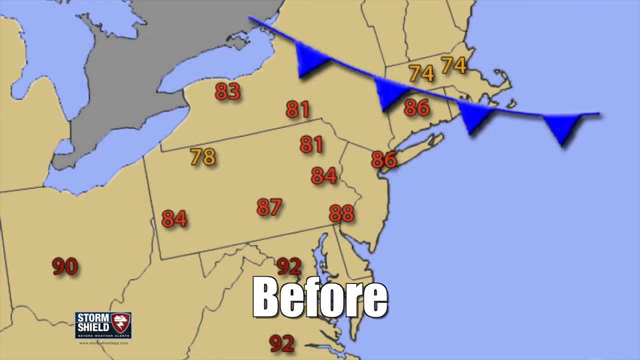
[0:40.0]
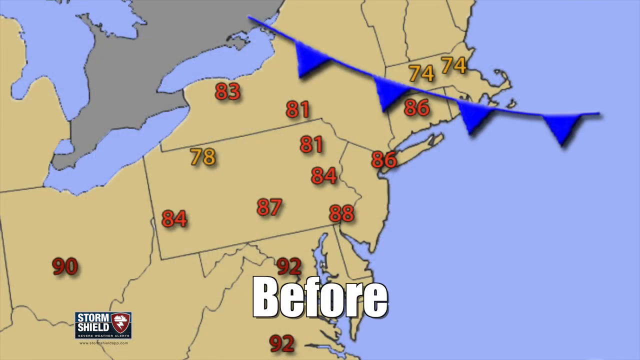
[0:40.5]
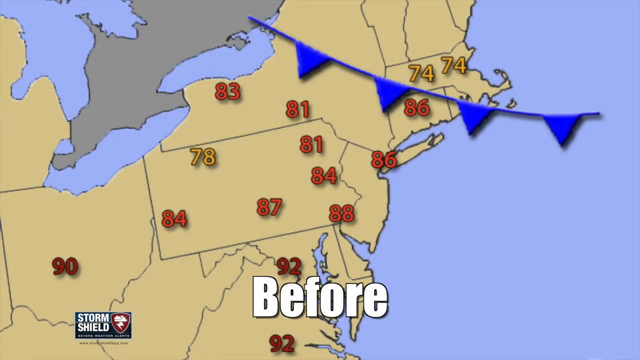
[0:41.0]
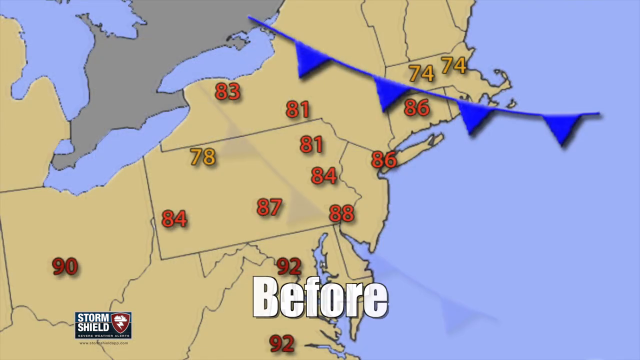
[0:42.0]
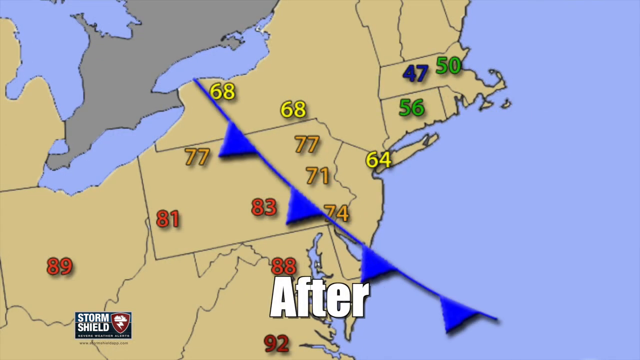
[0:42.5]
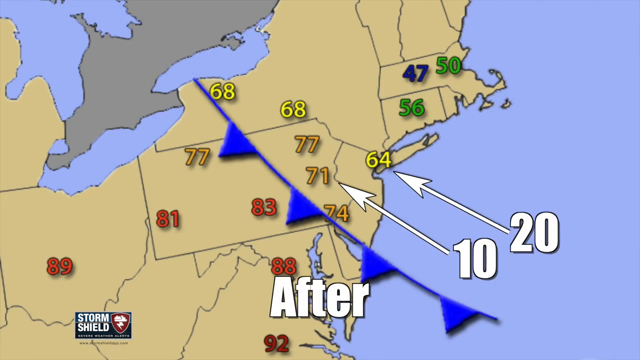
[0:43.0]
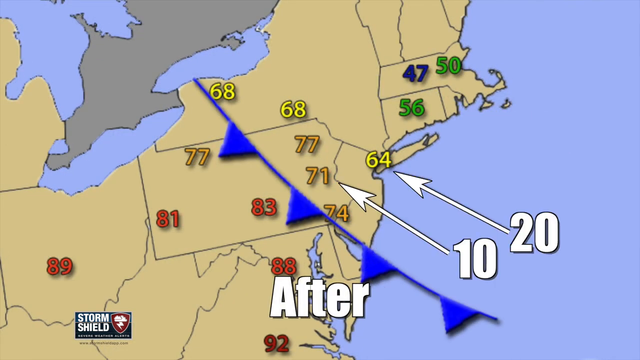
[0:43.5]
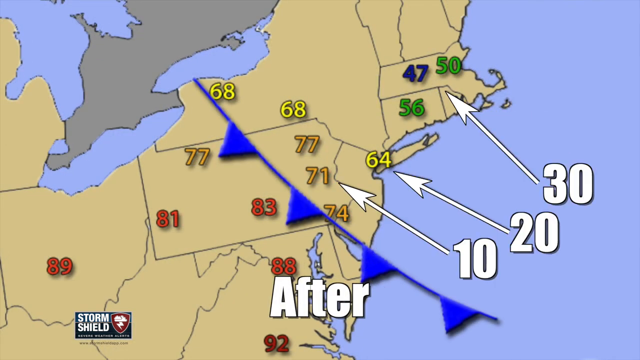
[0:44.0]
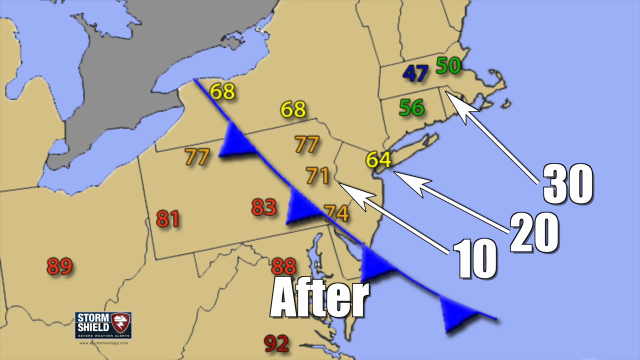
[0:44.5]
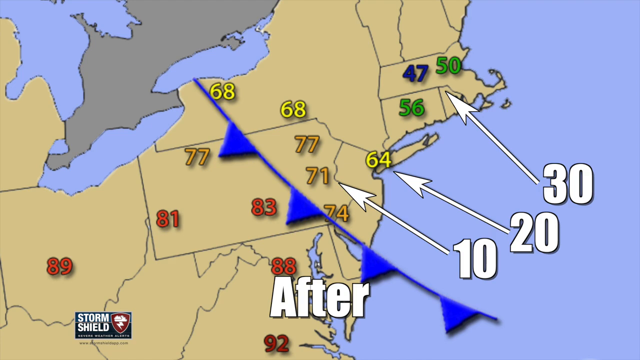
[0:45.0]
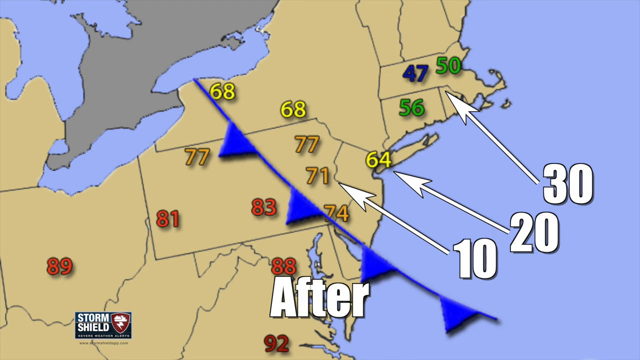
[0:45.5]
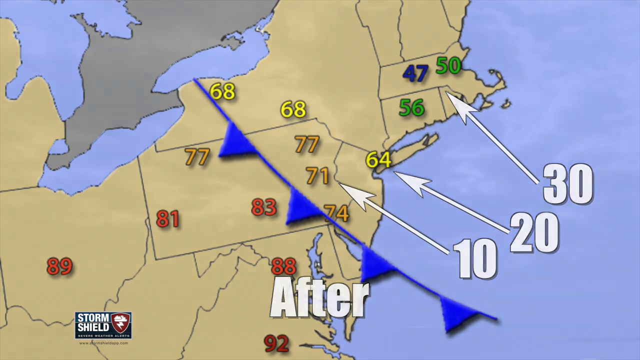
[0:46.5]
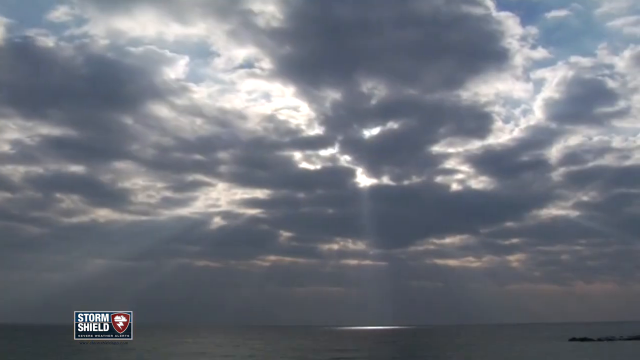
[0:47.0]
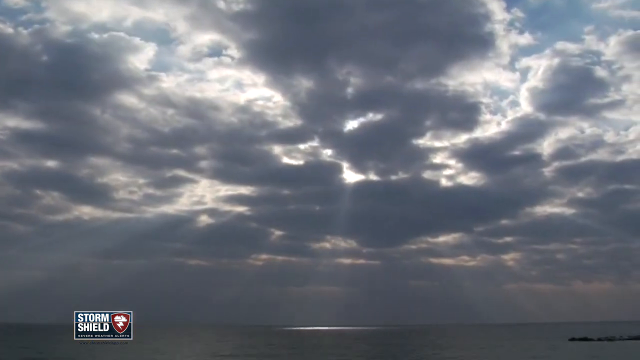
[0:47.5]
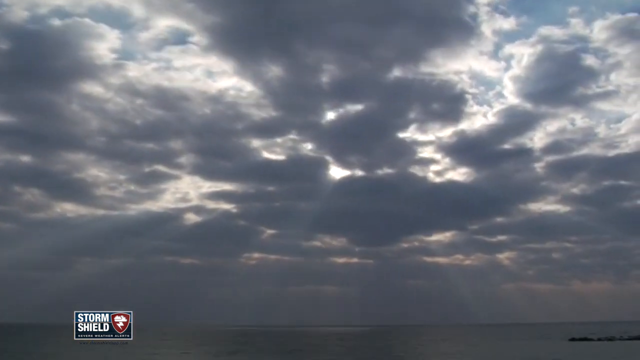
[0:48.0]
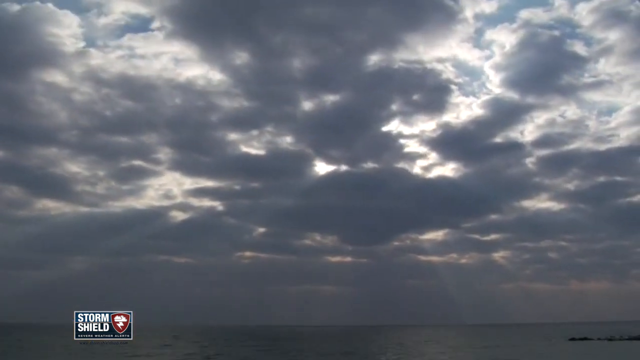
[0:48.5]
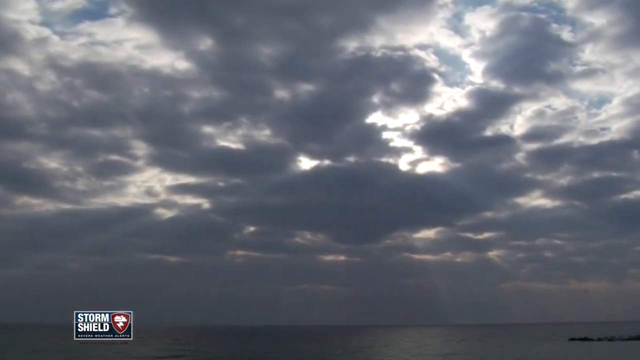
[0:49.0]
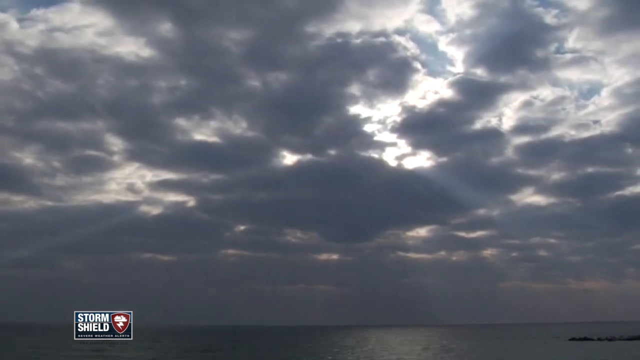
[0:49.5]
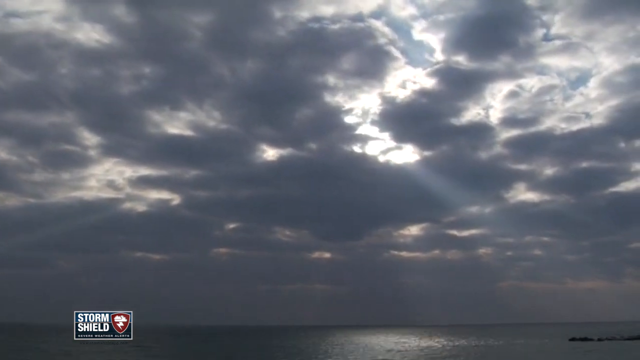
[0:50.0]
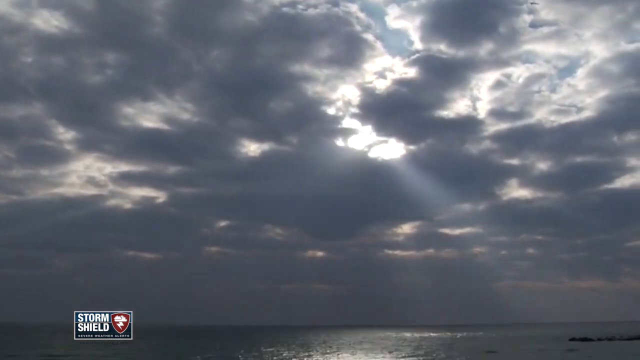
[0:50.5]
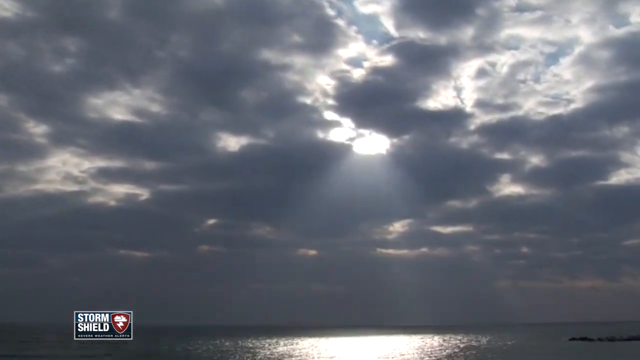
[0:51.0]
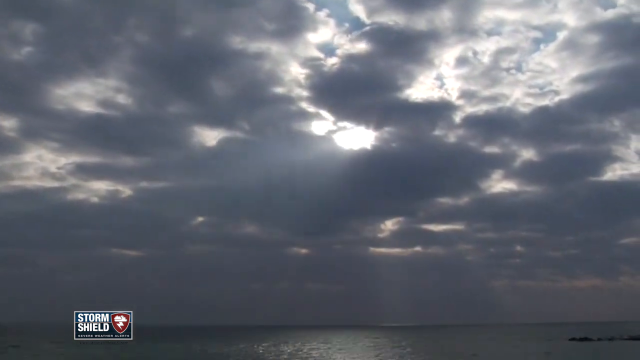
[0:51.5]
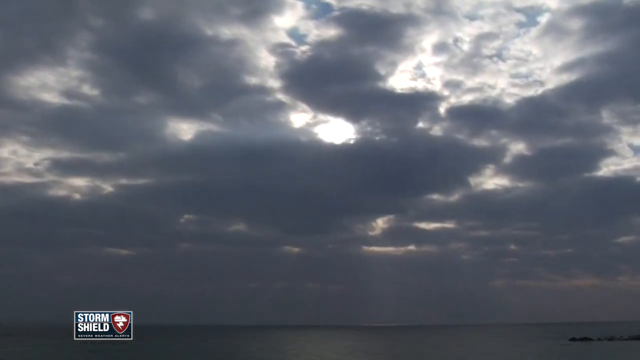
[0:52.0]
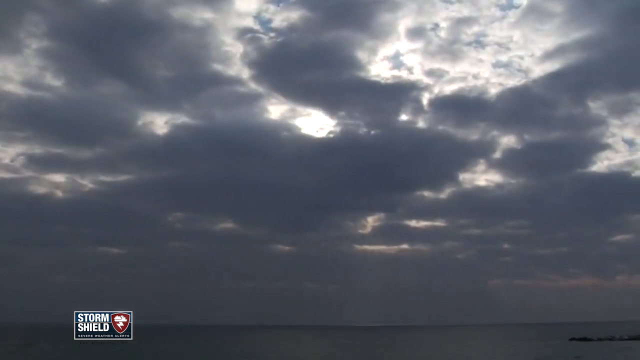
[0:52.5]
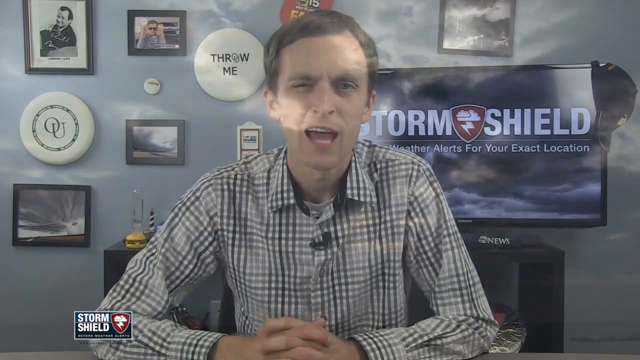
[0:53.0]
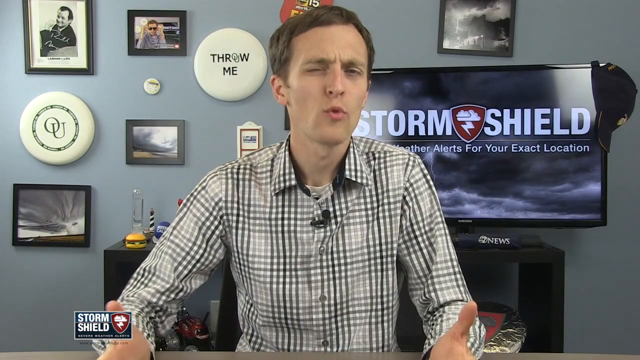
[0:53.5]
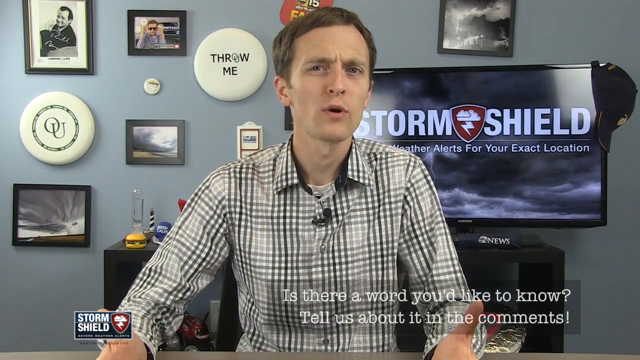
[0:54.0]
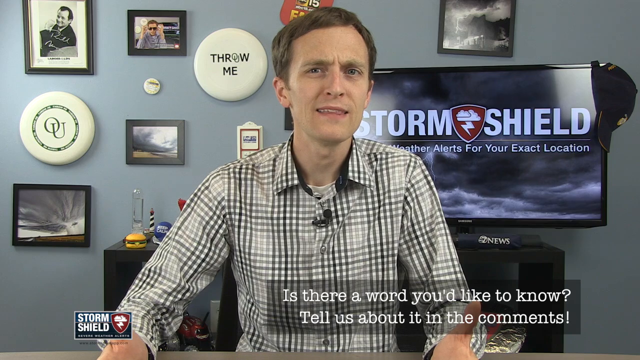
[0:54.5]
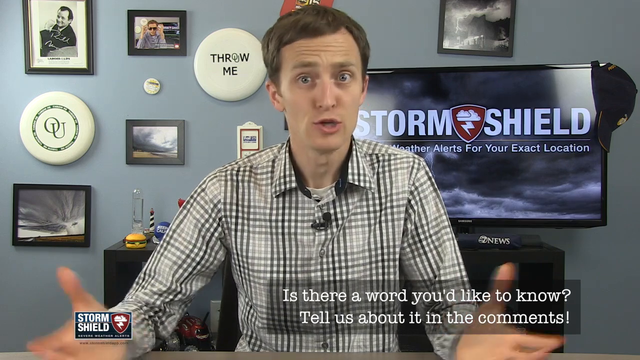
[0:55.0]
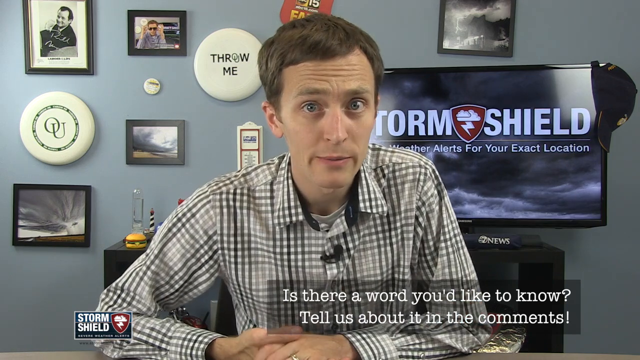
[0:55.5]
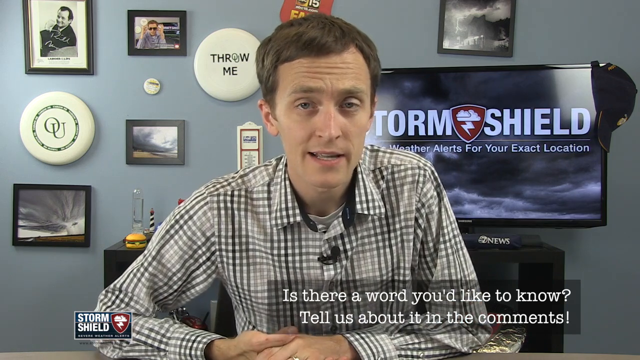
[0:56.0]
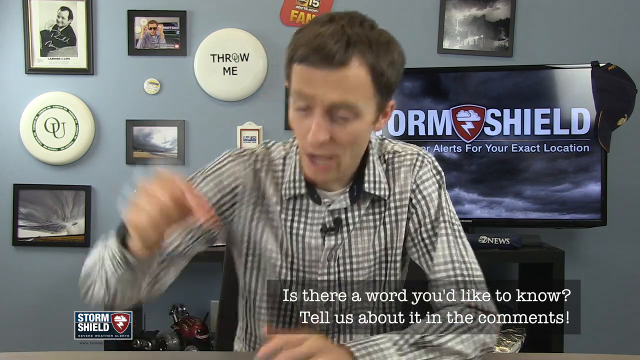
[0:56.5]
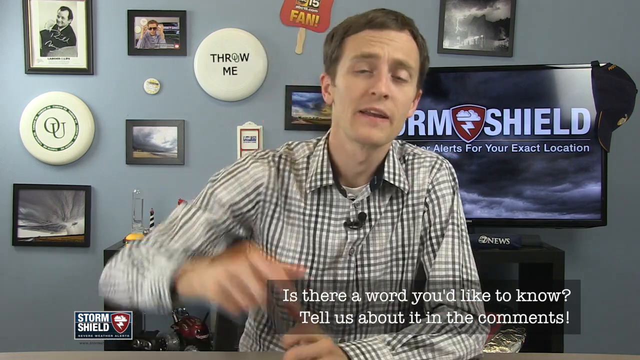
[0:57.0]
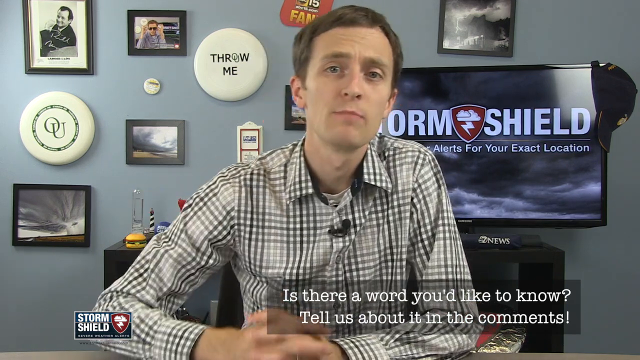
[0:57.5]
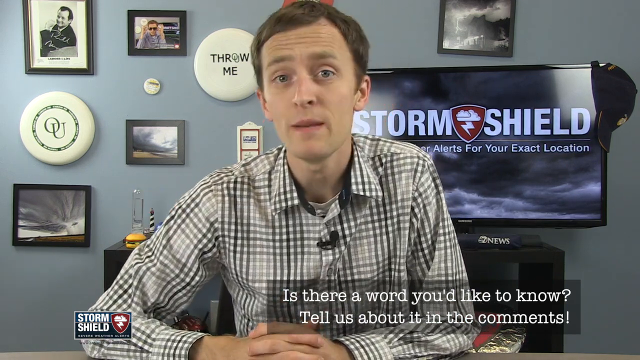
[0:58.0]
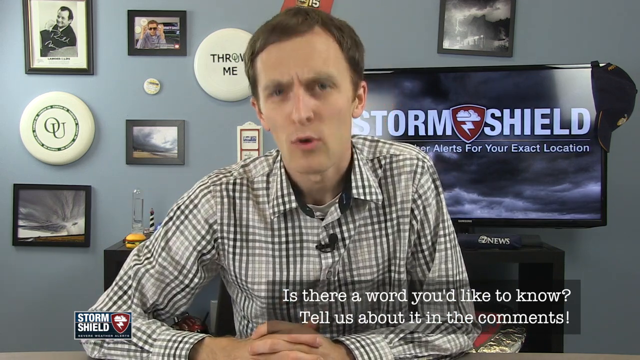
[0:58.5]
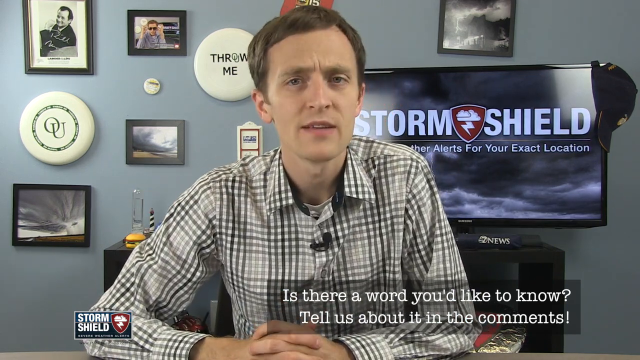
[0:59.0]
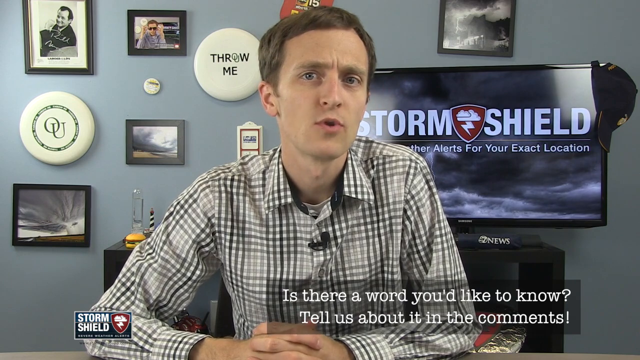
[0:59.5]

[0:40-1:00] A map of the United States is shown, with the New England area kind of a tan color. Only temperatures are visible; the states are not really shown. A before view shows some temperatures in the 80s and 70s, and an after view shows them dropped by 10 to 20 or 30 degrees, from the 70s to the 60s, and some down to the 50s and 40s. Next, clouds move across and the scene becomes kind of dark. The video returns to Jason's office, where he is speaking, and the text "is there a word you'd like to know, tell us about it in the comments" is in the bottom right-hand corner of the screen. He looks kind of intently at the screen and points down toward the bottom of the screen, as if to direct the viewer to that question.